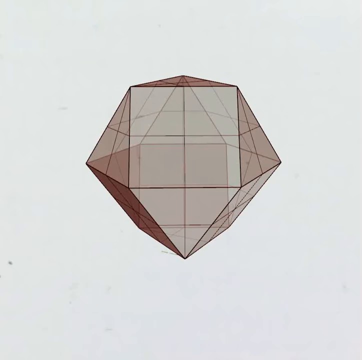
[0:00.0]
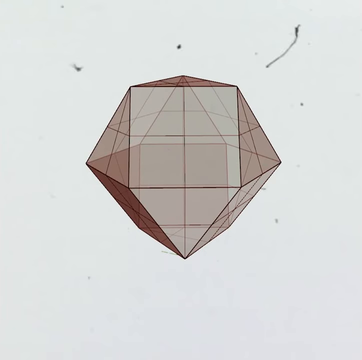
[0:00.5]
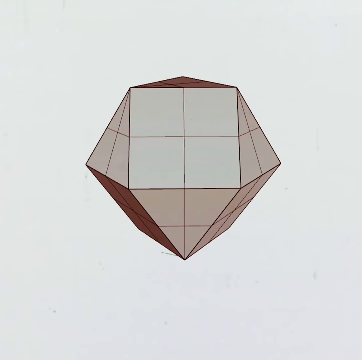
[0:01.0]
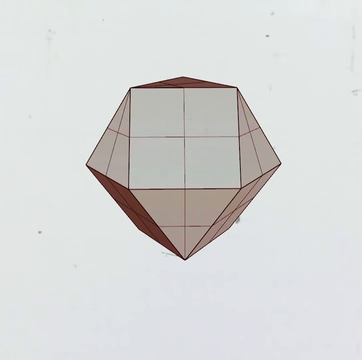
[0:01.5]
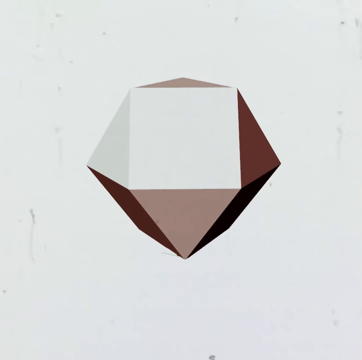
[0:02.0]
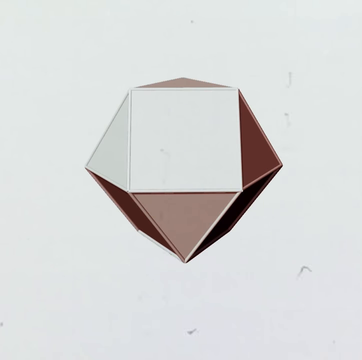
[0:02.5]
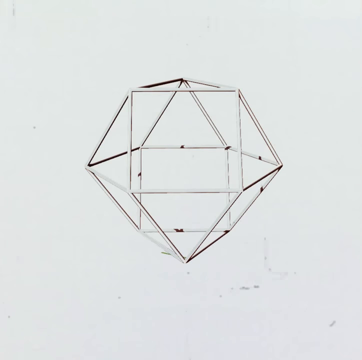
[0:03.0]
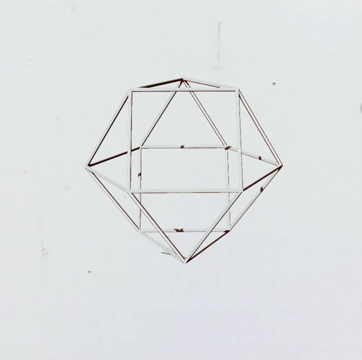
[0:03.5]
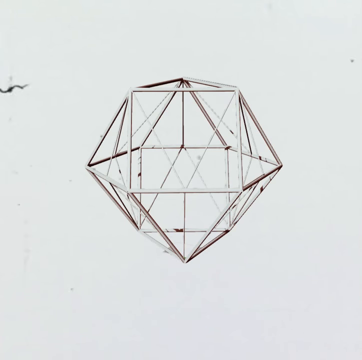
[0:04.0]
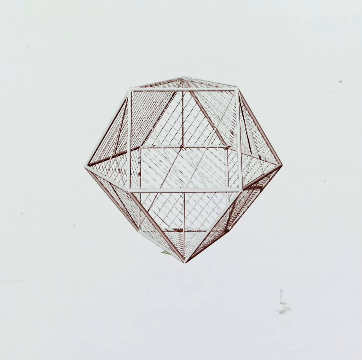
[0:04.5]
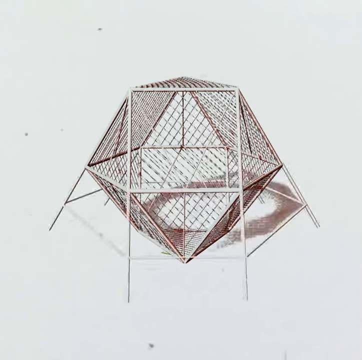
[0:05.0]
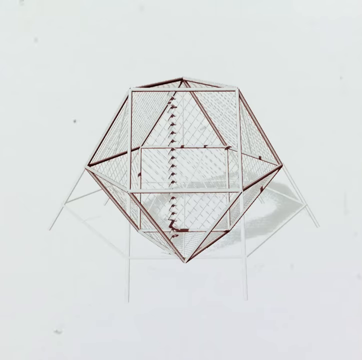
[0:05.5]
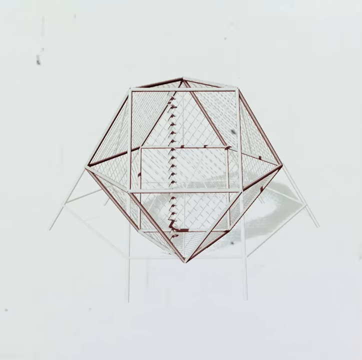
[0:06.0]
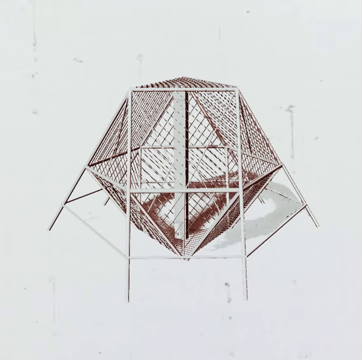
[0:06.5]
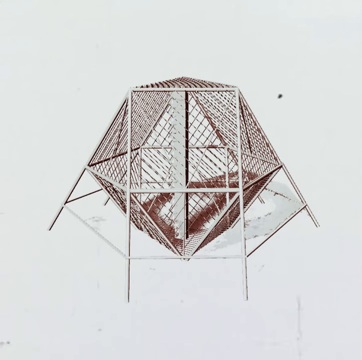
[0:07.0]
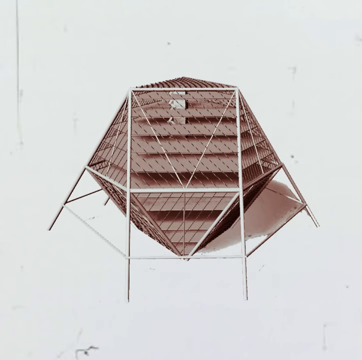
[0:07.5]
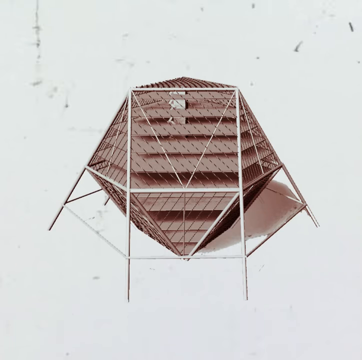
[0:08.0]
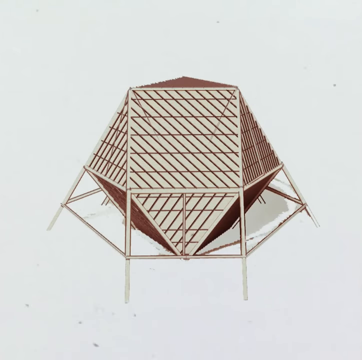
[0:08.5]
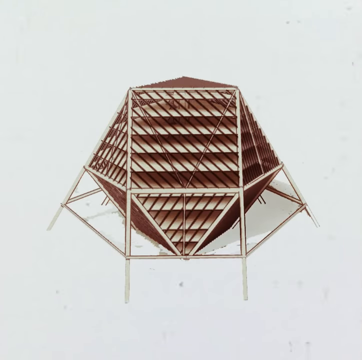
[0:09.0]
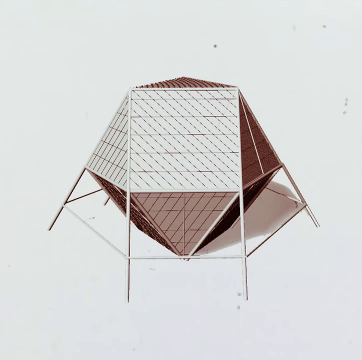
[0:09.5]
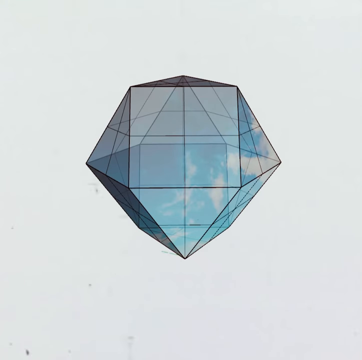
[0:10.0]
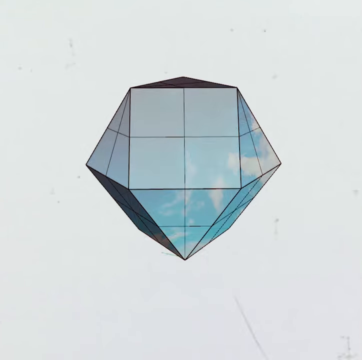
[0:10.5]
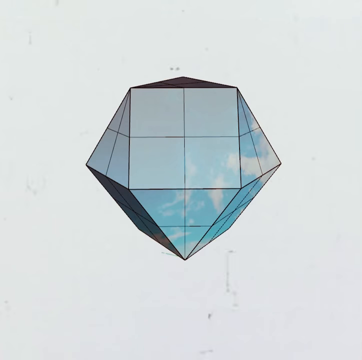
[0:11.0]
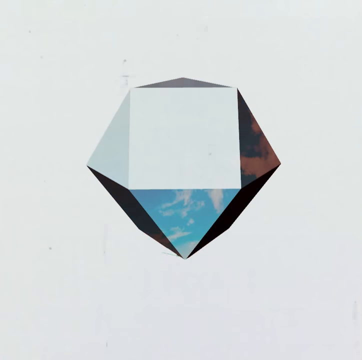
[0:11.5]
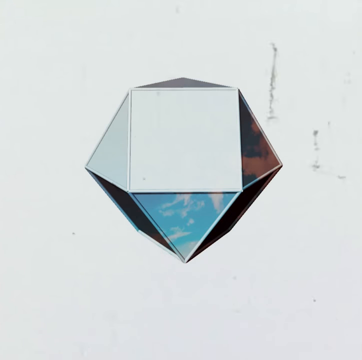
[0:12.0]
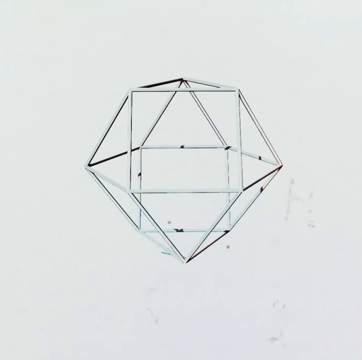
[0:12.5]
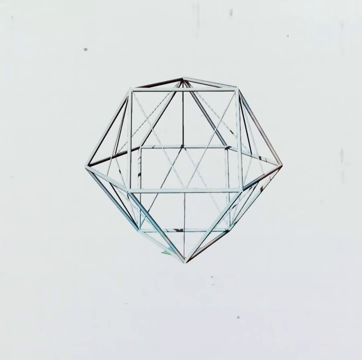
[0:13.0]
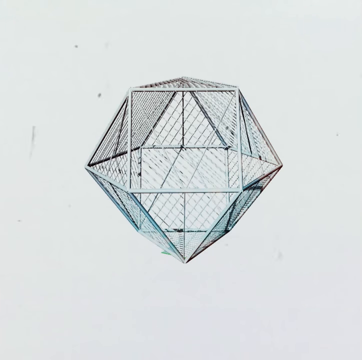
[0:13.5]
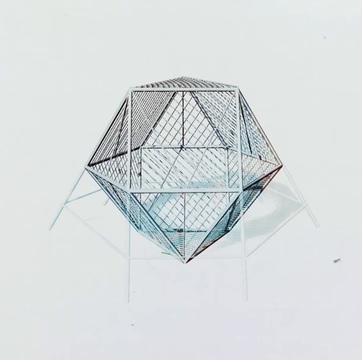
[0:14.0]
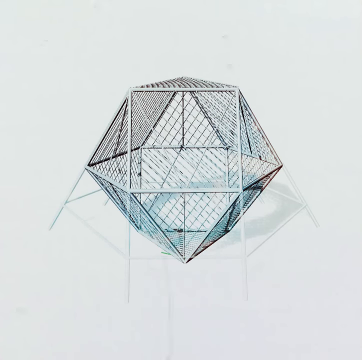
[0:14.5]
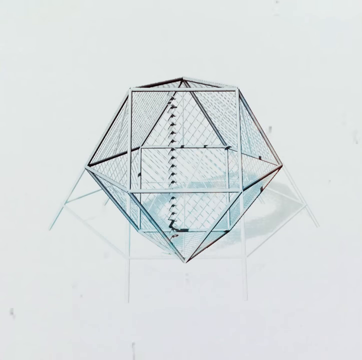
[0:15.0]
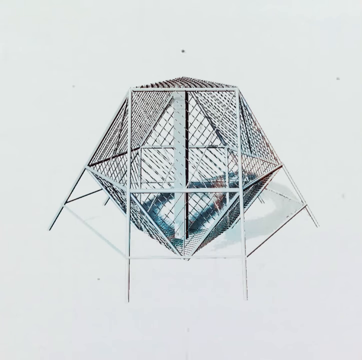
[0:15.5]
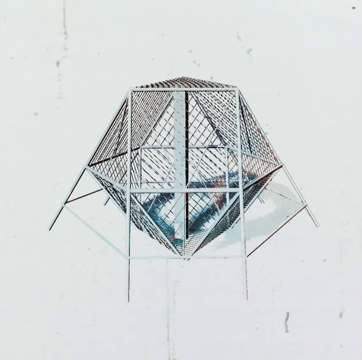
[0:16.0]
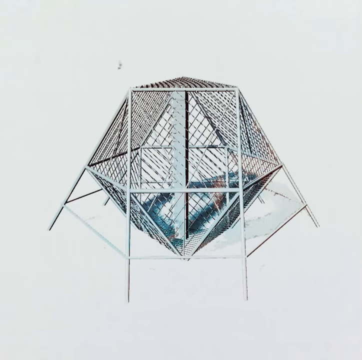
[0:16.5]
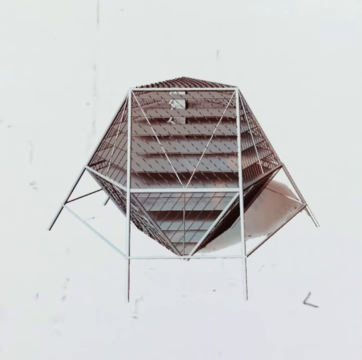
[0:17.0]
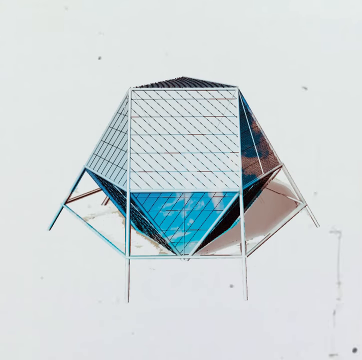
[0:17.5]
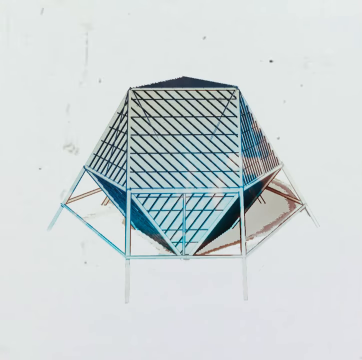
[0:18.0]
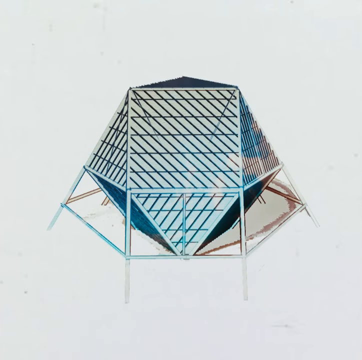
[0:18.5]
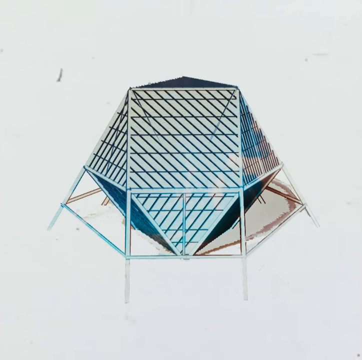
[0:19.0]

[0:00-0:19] A mostly white background shows, in the center of the screen, a geometric shape that looks similar to a diamond tube. It changes a little, and a time lapse shows grain textures changing rapidly on the screen while the texture of the three-dimensional object also changes, shifting from red to different shades of red and then to white. It then goes clear and is visibly being unbuilt in reverse order. It breaks down into a grid of line patterns, then changes to show poles coming in from the outside, in reference to how it was designed. It flips back and forth through this pattern a few times, its colors changing from red to white to blue and green.